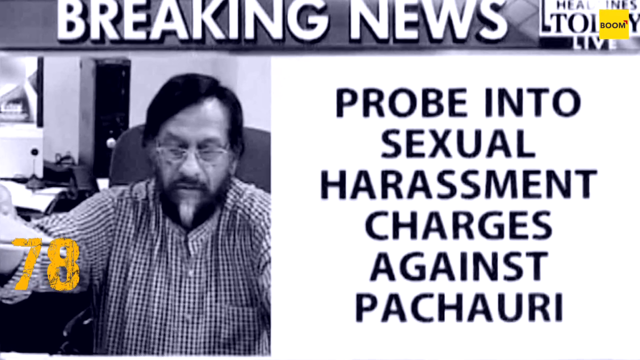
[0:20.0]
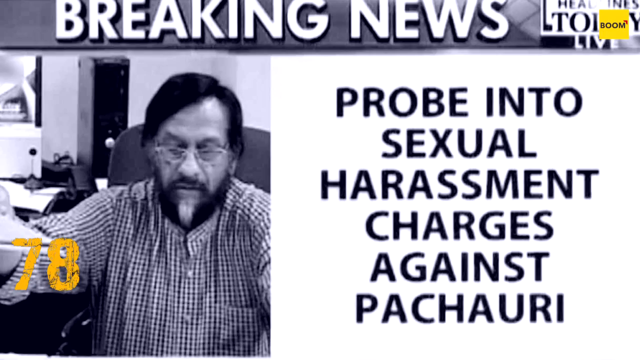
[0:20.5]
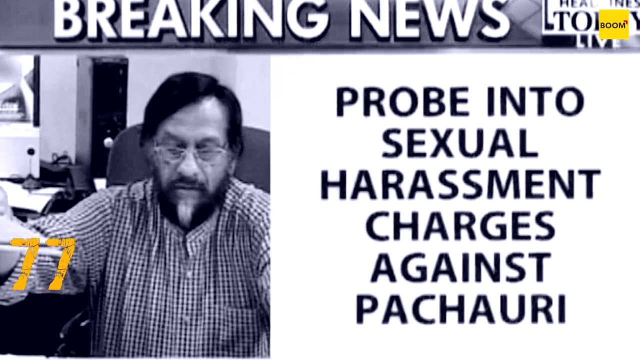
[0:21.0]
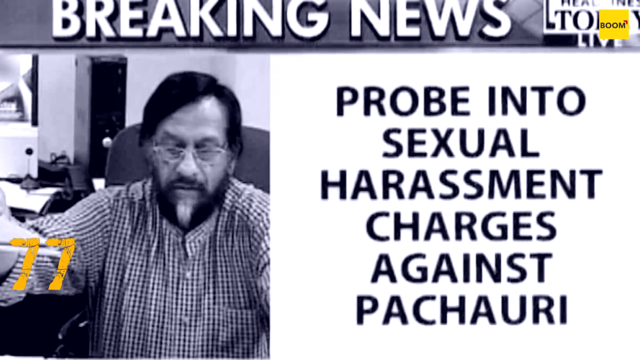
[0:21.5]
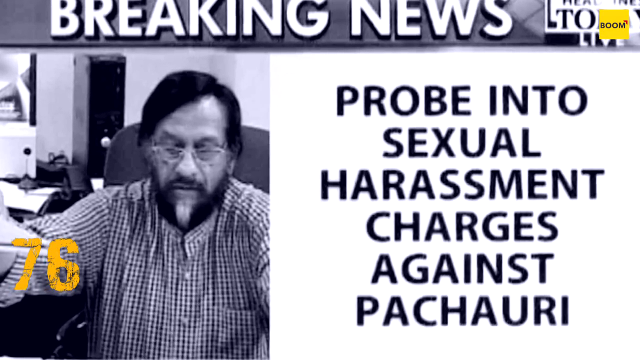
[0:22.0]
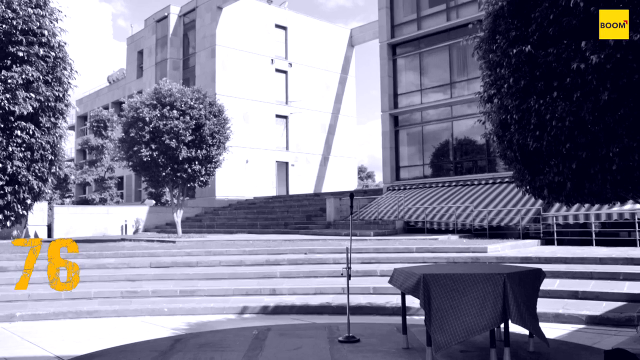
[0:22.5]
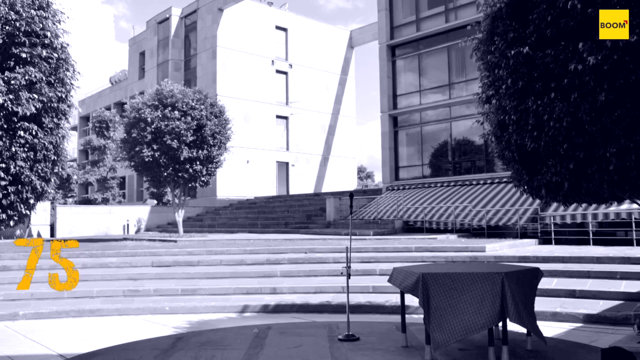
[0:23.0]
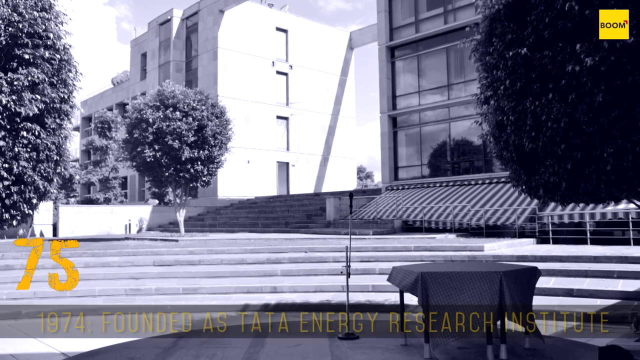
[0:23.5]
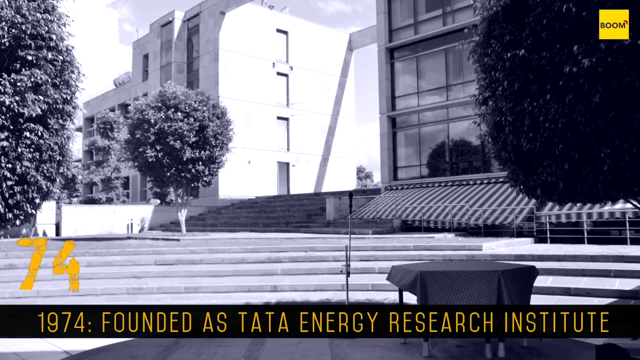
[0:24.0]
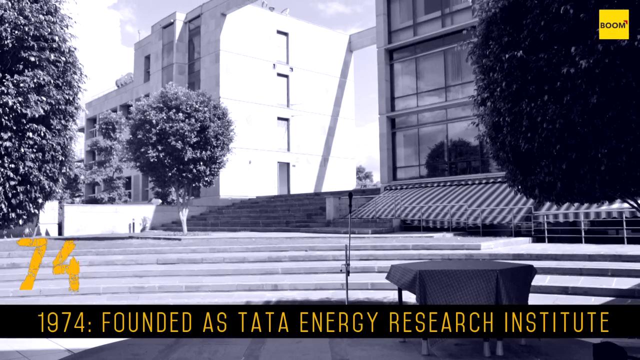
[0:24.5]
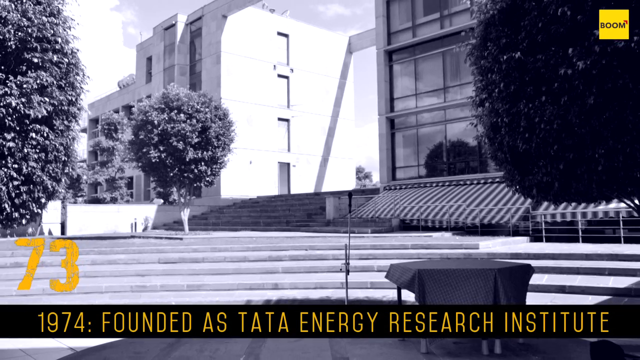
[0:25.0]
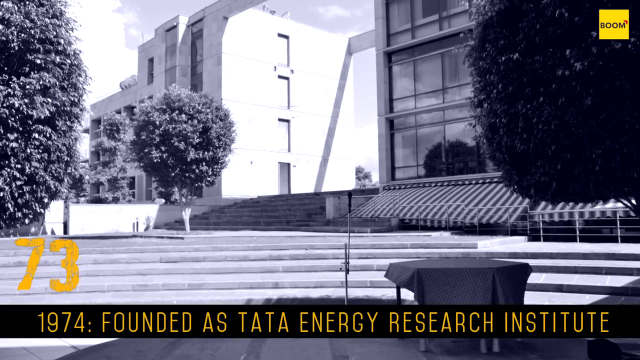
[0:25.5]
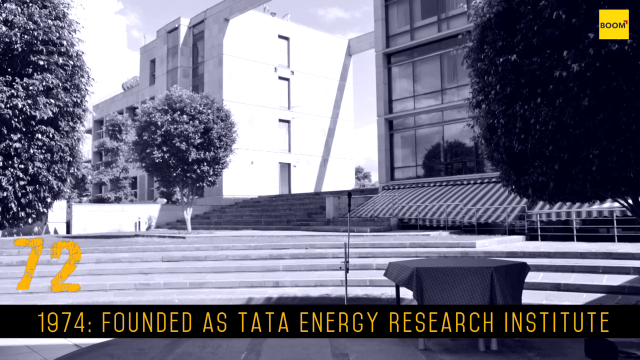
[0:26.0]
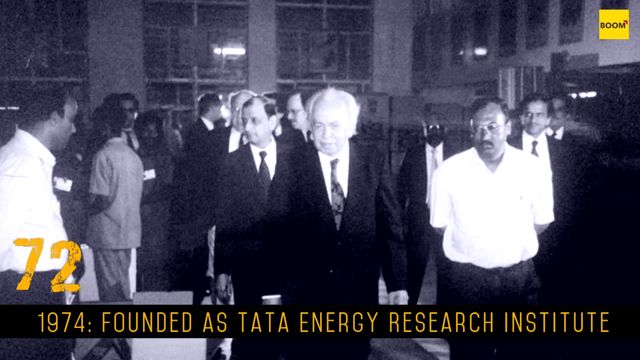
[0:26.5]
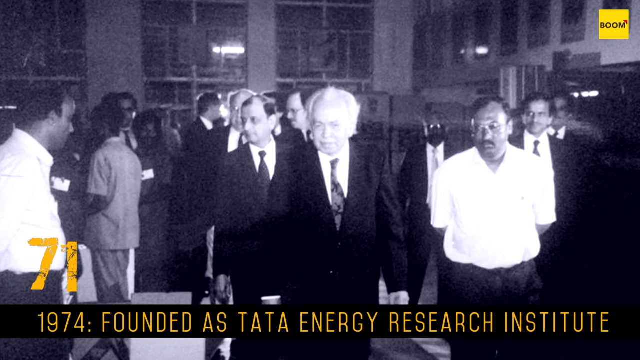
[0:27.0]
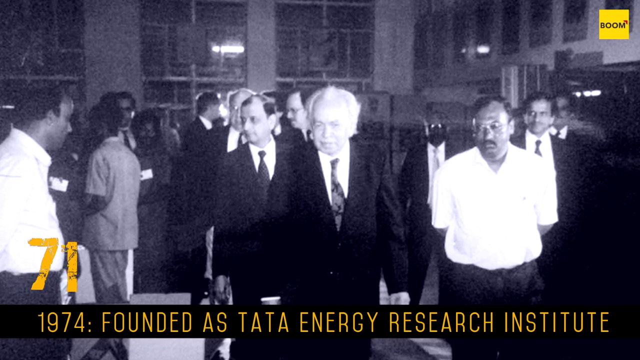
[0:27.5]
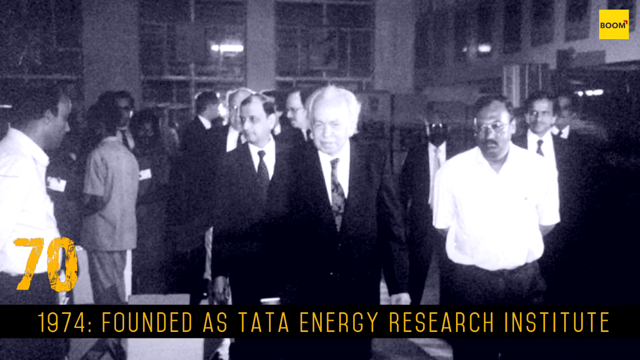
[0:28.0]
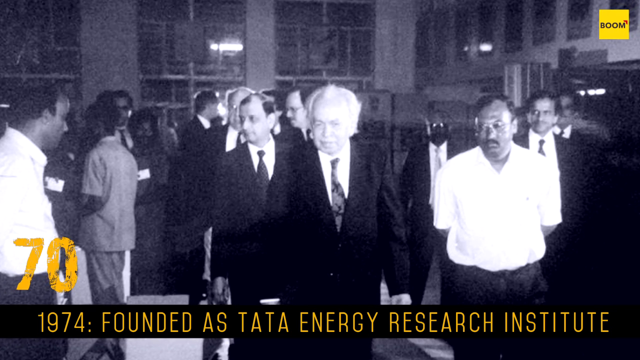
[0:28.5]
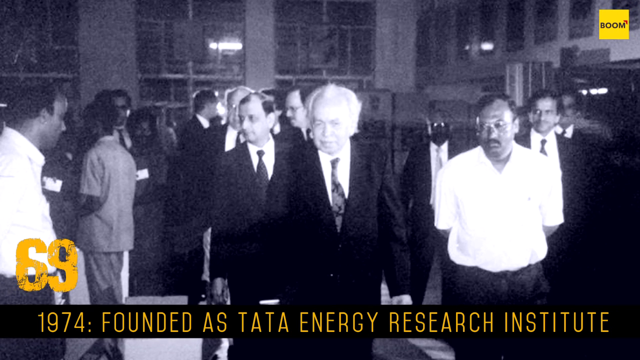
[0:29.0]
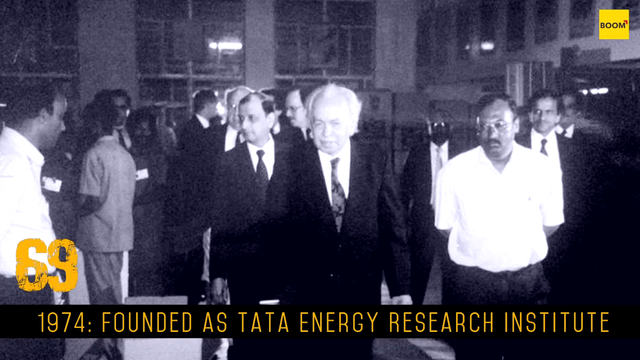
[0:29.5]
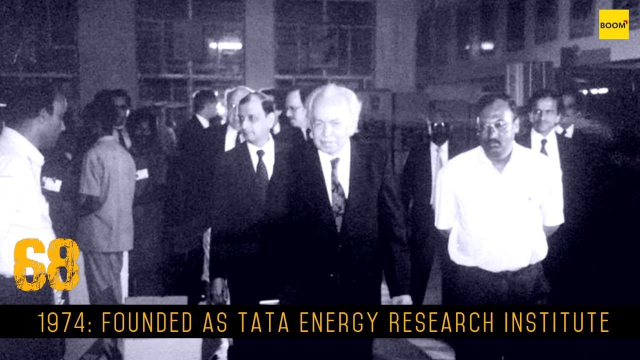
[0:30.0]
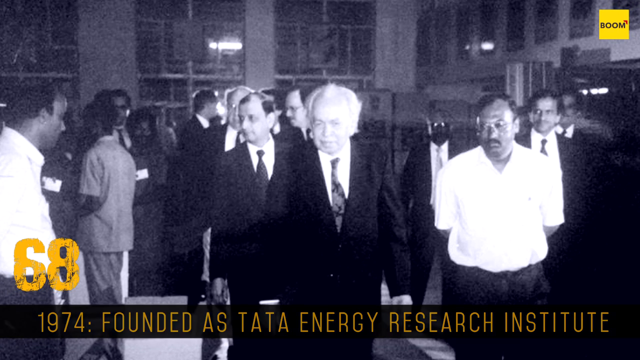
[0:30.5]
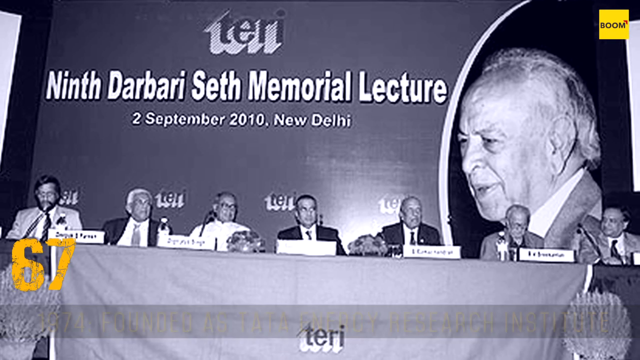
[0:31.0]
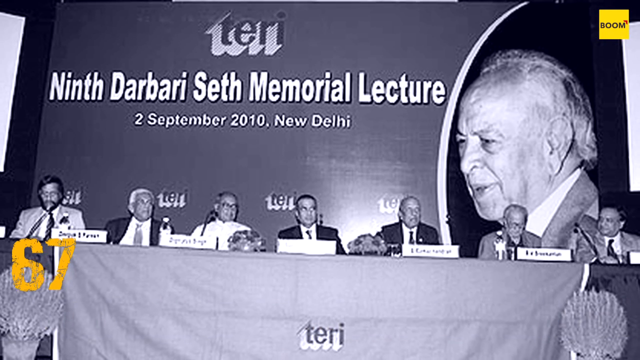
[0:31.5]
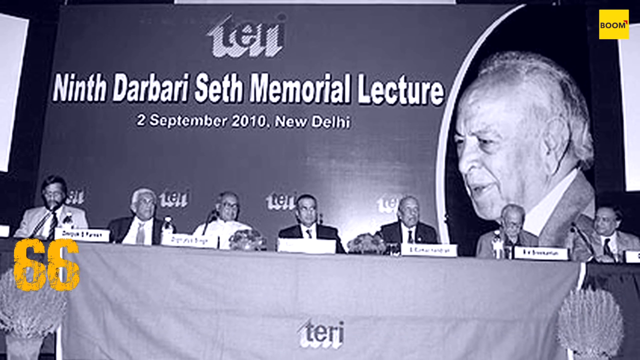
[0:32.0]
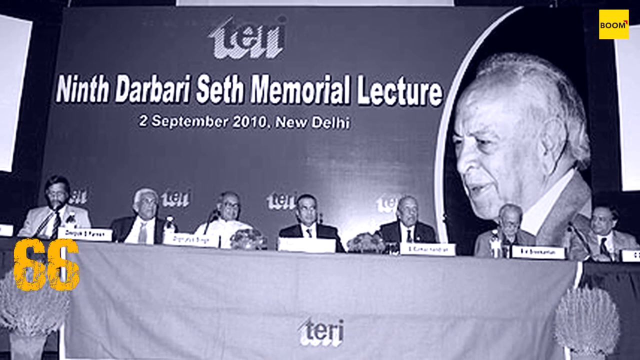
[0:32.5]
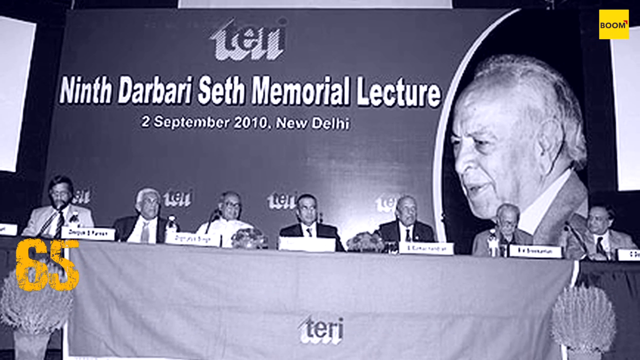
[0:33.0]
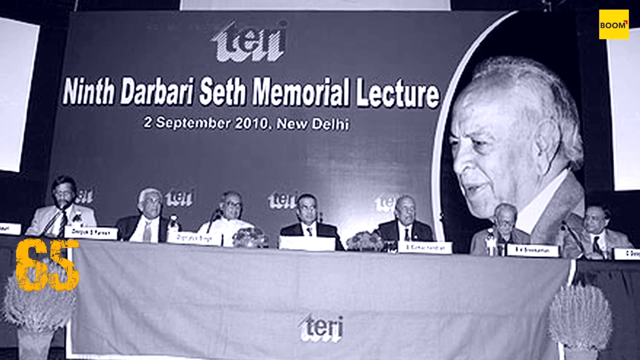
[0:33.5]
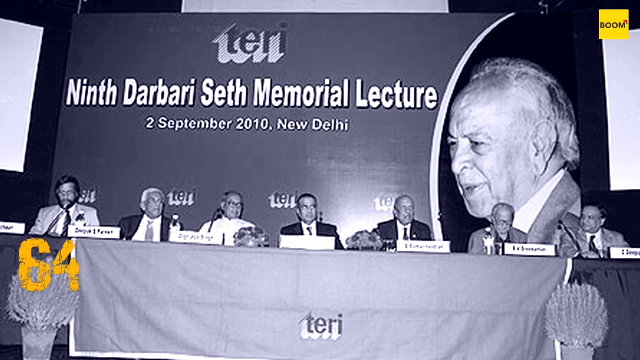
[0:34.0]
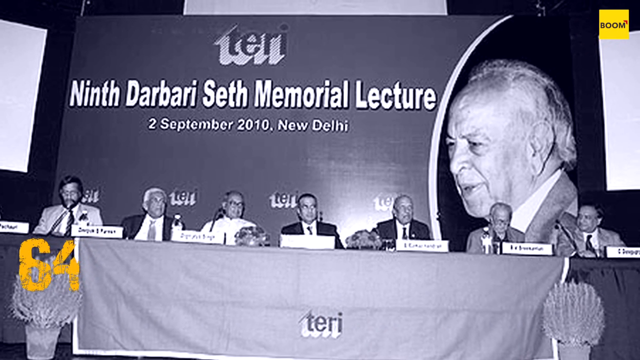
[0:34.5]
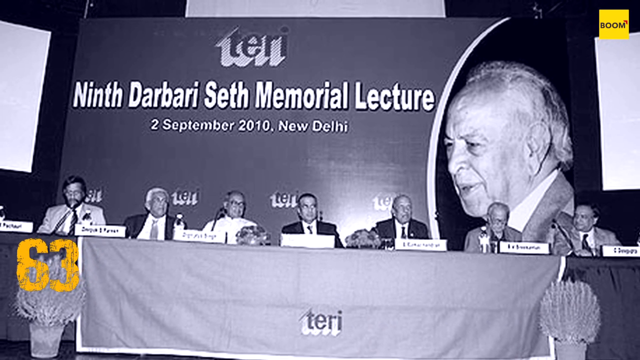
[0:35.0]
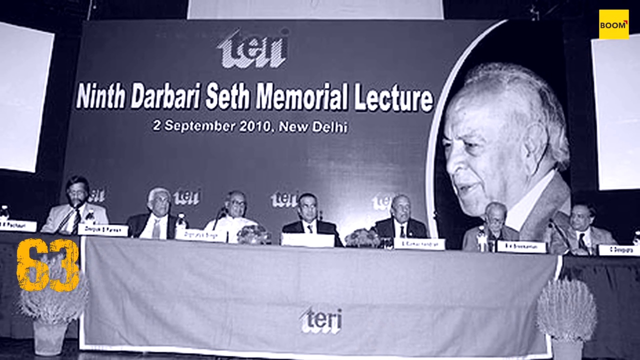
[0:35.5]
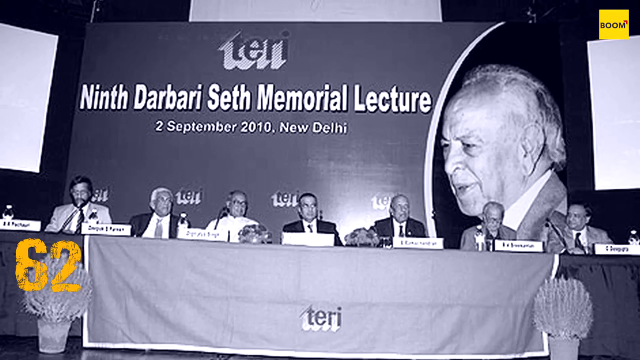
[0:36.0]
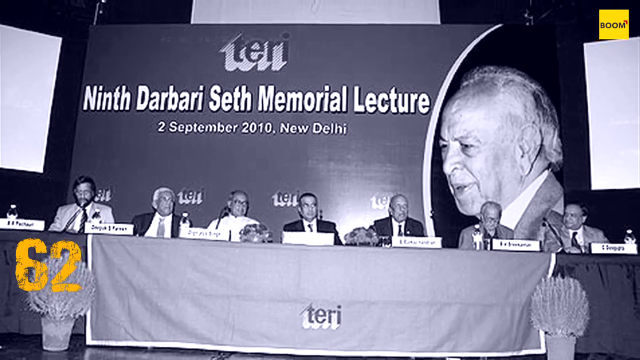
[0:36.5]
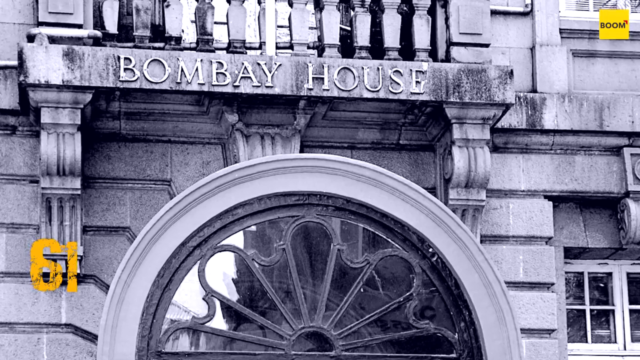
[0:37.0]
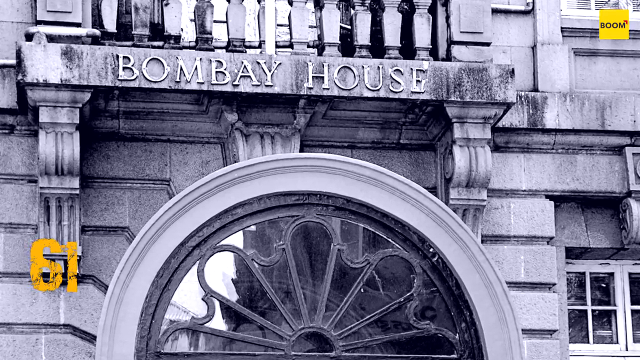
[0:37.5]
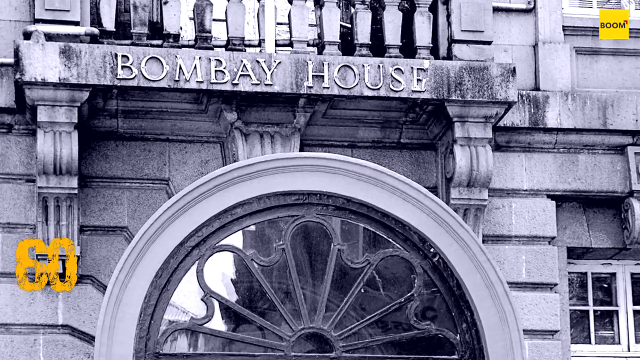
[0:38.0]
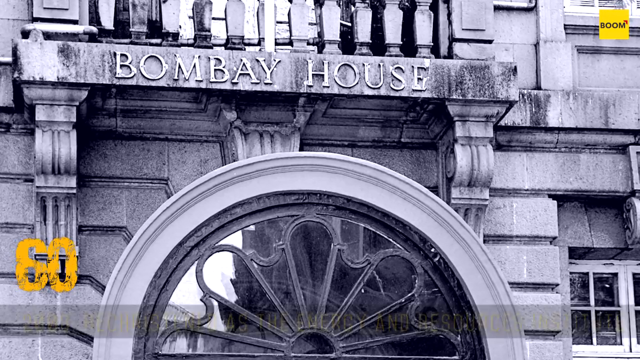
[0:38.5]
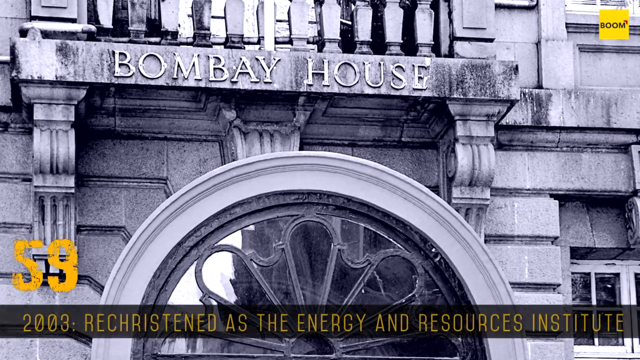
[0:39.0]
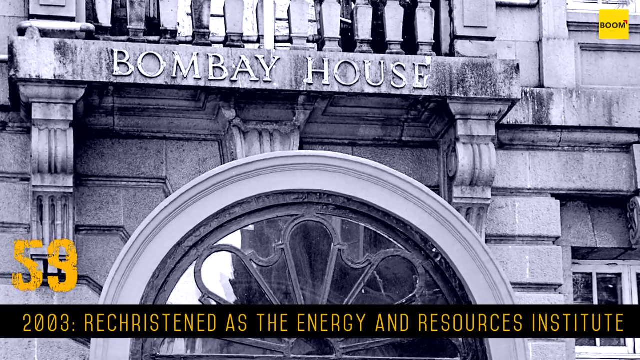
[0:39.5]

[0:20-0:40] News accusing Pachauri of sexual harassment charges is shown. Next comes a picture of a building with bottom text mentioning 1974 and "founded as Theta Energy Research Institute". A picture shows men in business suits carrying briefcases and walking toward the camera, accompanied by other men following them. Text indicates that one of them has died, and a memorial lecture held in New Delhi on 2 September 2010, organized by Terry, is shown with a group of people there. Then comes a picture of what seems to be the Bombay house, showing the entrance of the place.